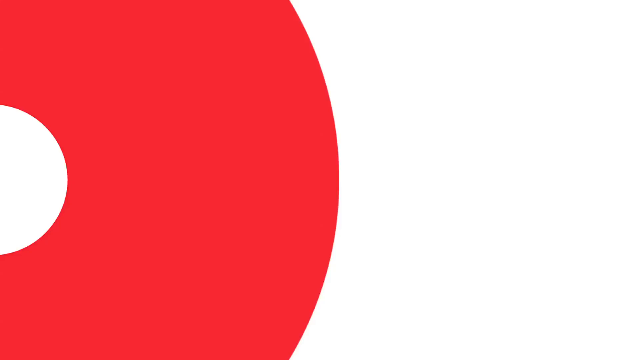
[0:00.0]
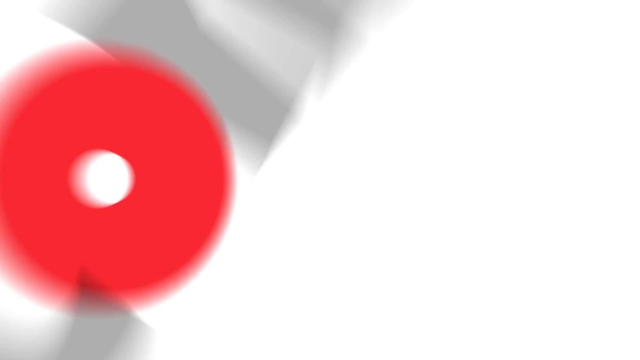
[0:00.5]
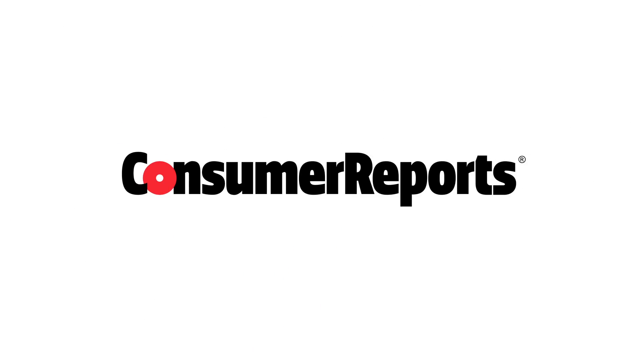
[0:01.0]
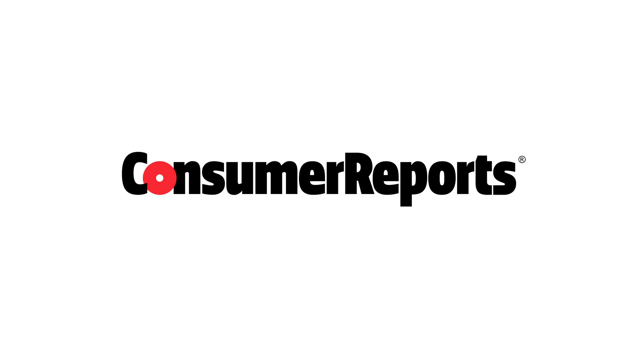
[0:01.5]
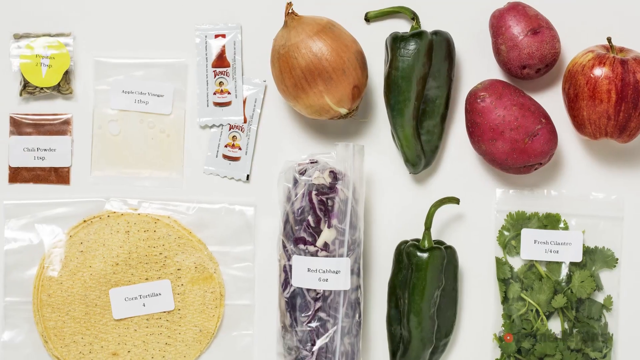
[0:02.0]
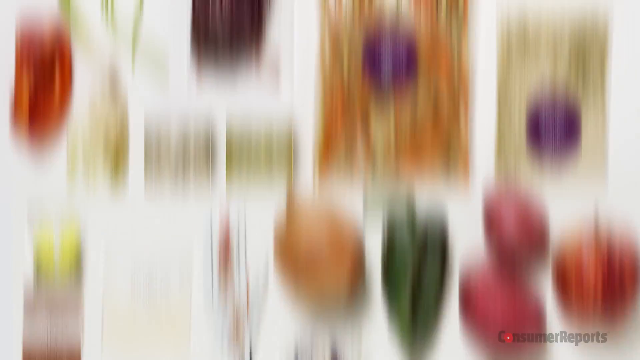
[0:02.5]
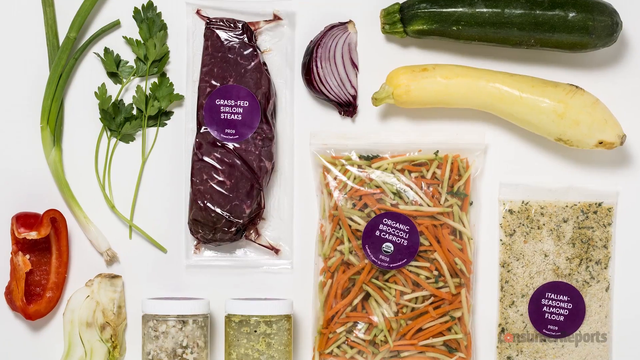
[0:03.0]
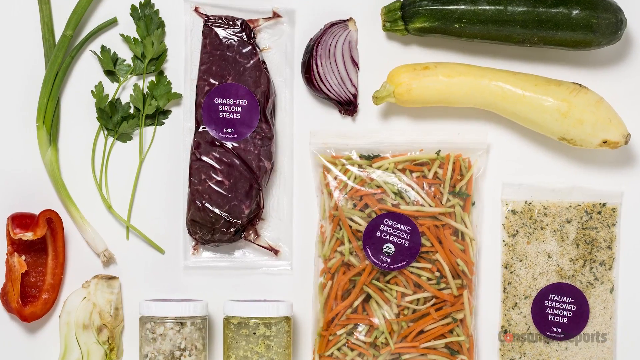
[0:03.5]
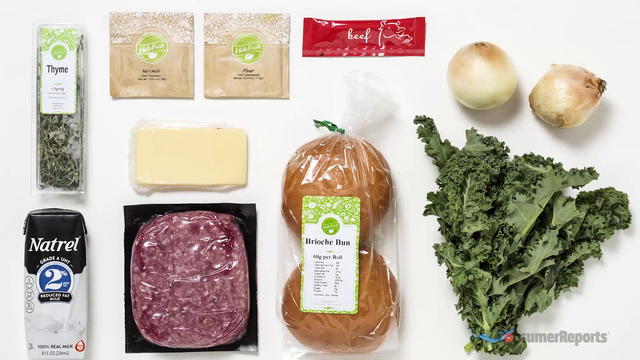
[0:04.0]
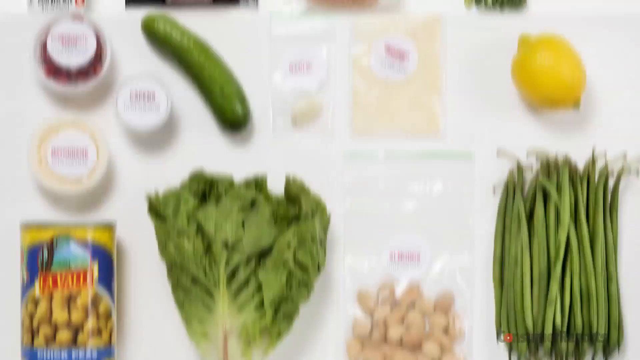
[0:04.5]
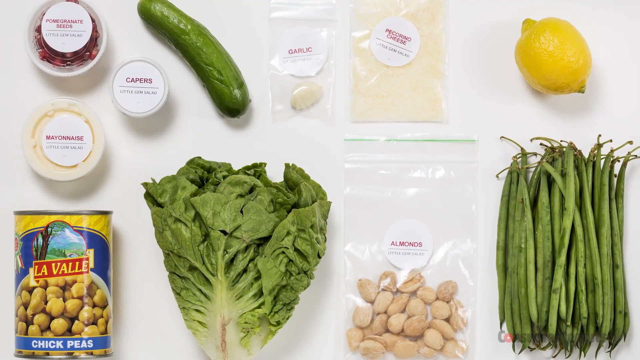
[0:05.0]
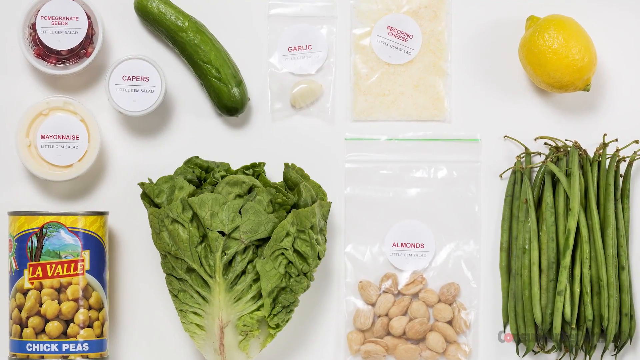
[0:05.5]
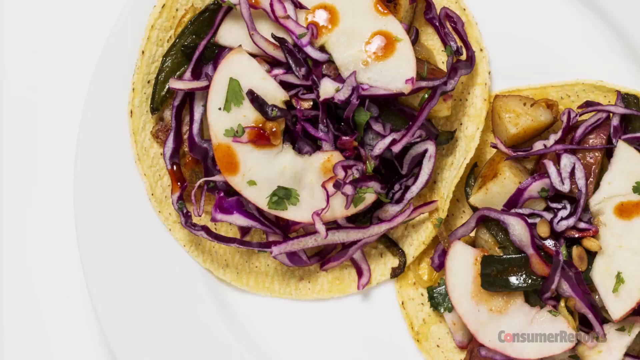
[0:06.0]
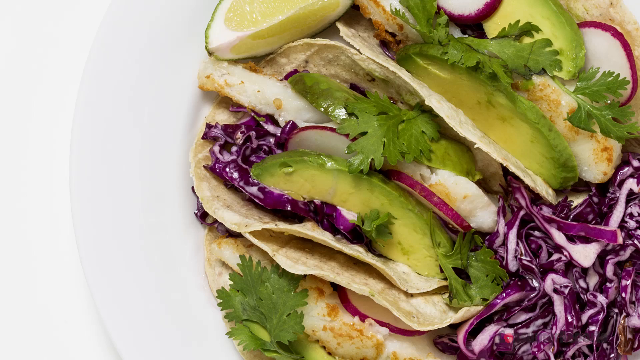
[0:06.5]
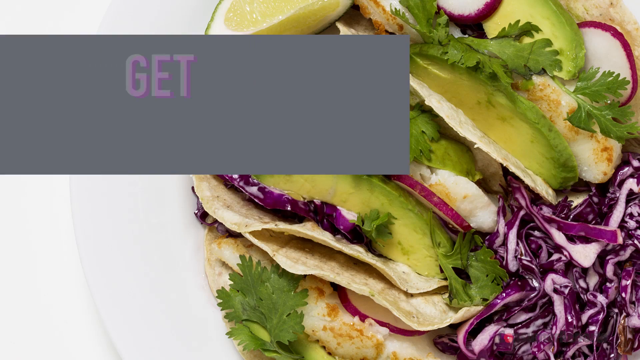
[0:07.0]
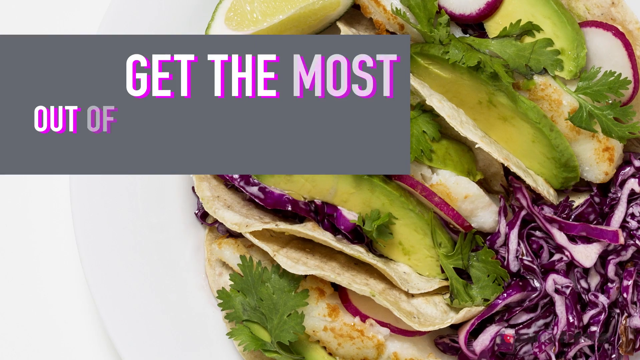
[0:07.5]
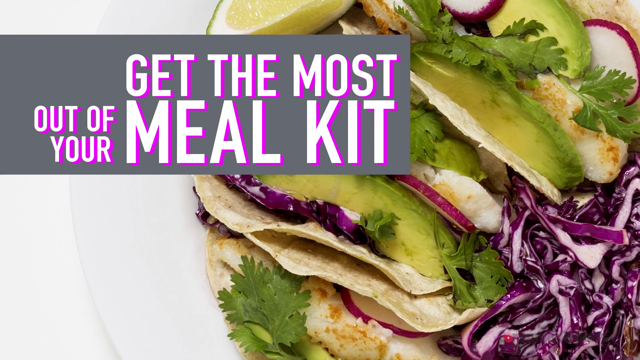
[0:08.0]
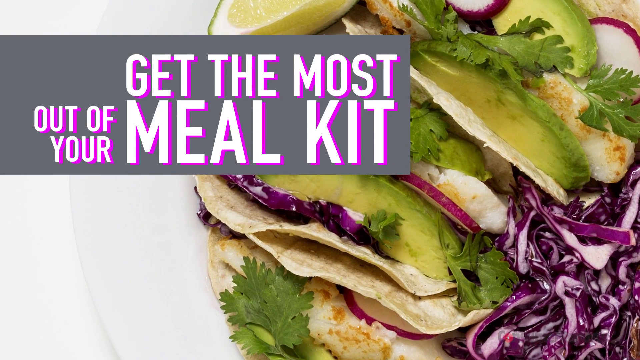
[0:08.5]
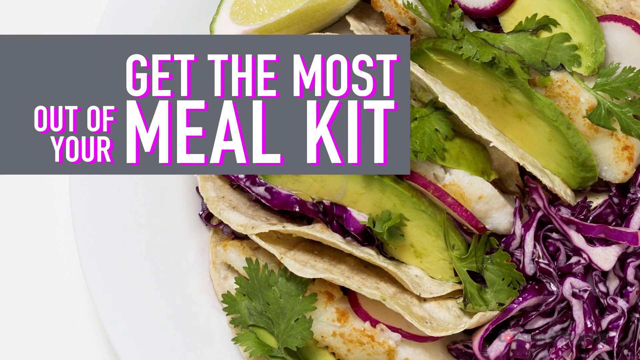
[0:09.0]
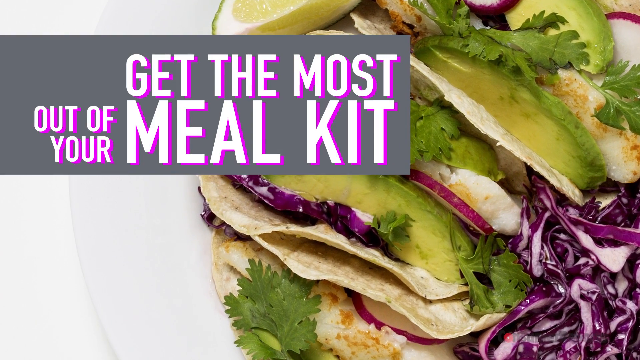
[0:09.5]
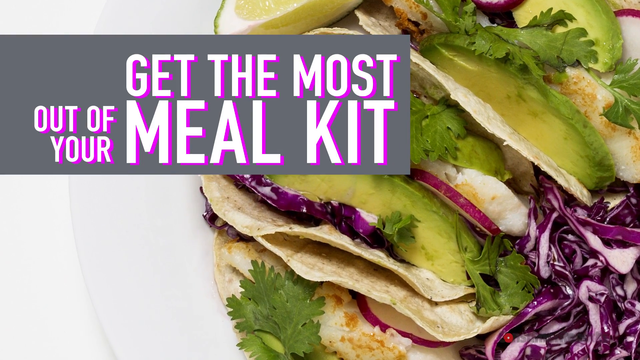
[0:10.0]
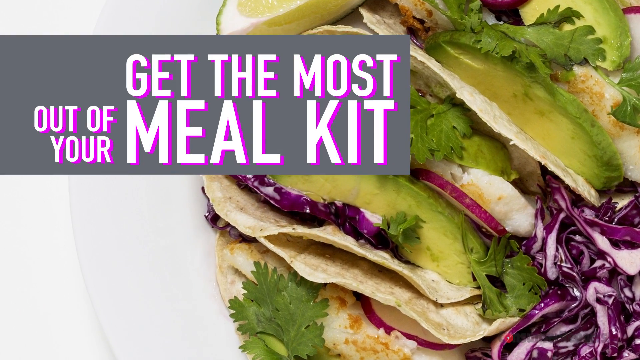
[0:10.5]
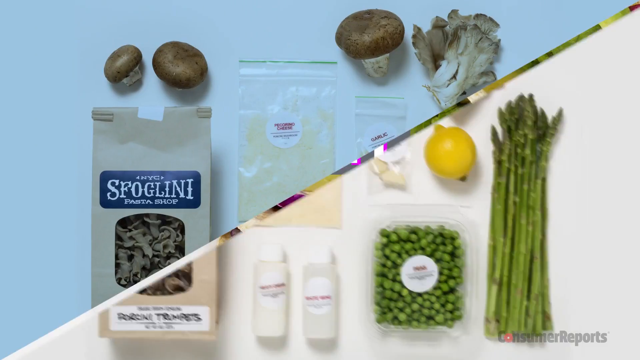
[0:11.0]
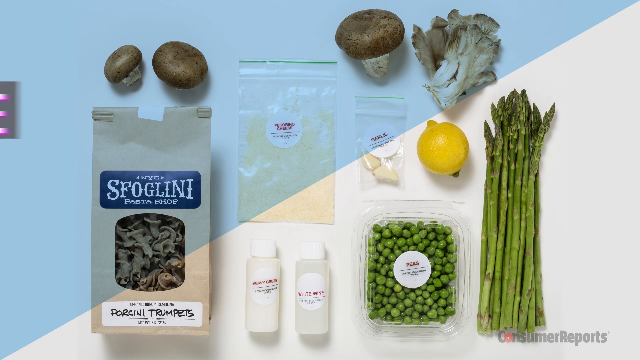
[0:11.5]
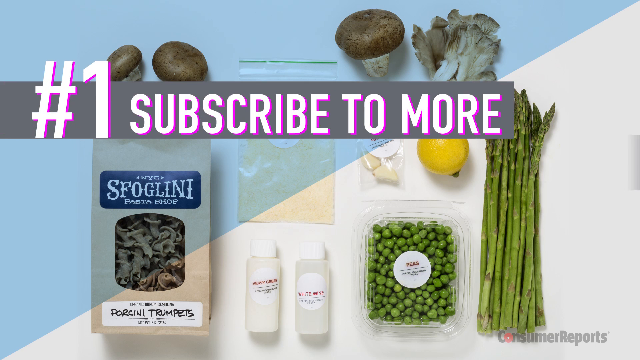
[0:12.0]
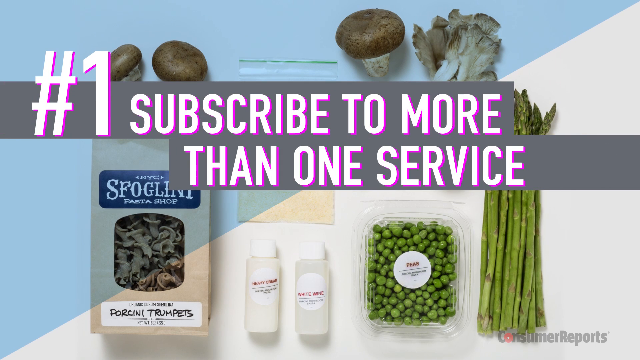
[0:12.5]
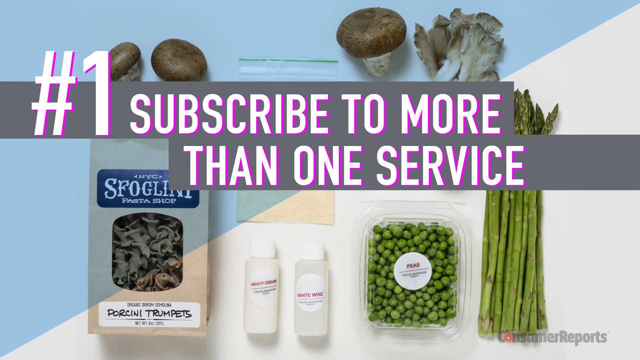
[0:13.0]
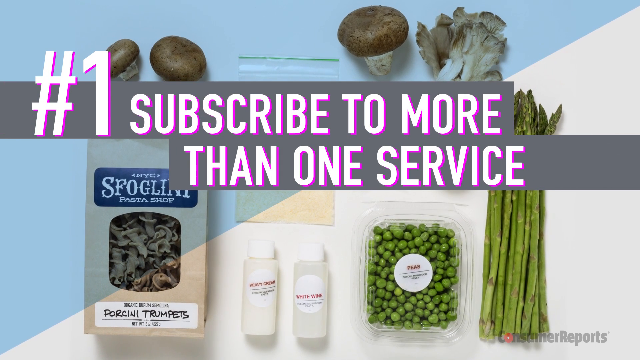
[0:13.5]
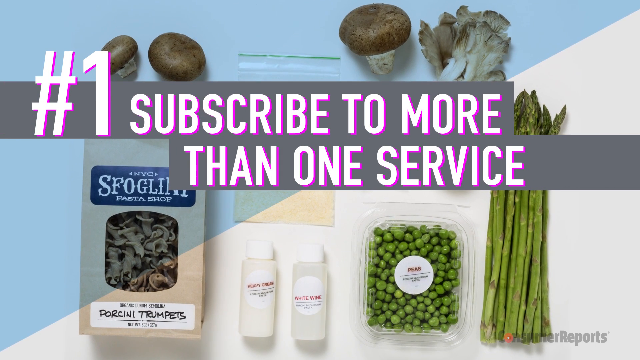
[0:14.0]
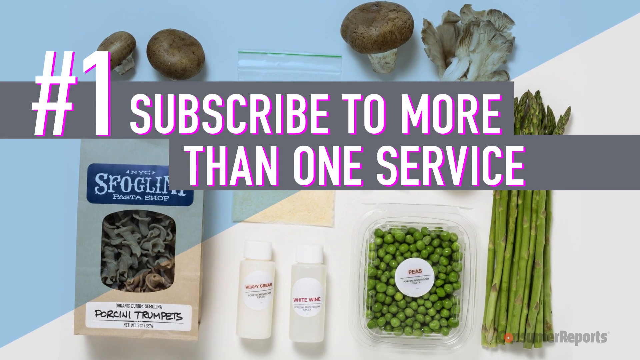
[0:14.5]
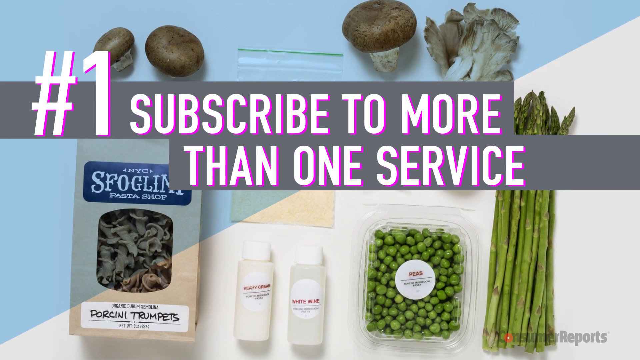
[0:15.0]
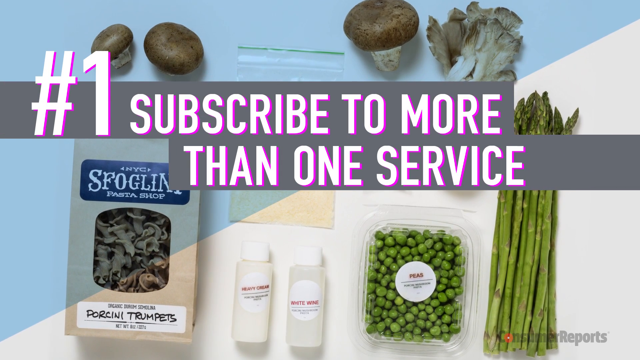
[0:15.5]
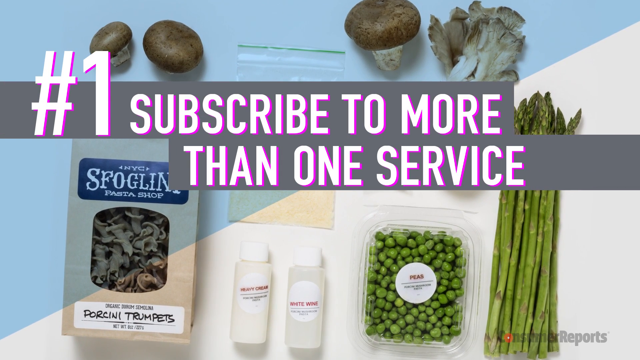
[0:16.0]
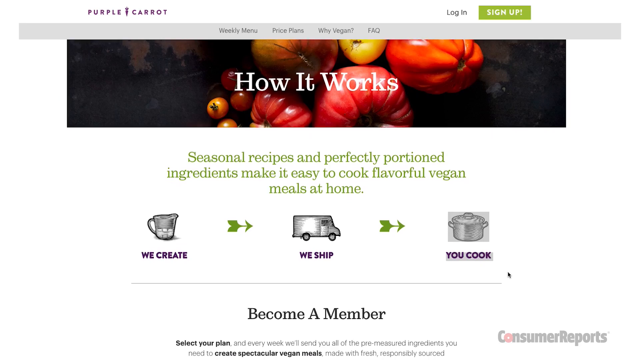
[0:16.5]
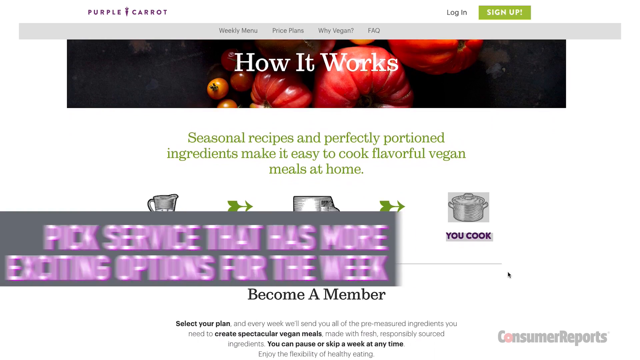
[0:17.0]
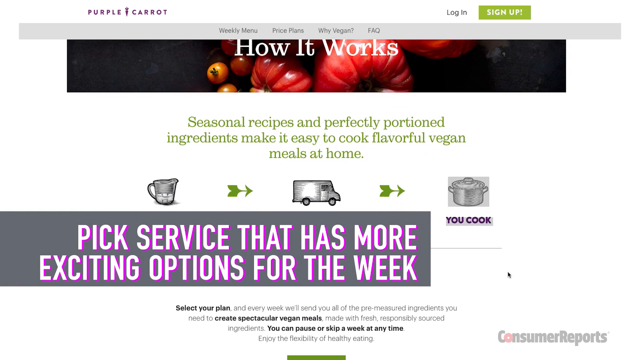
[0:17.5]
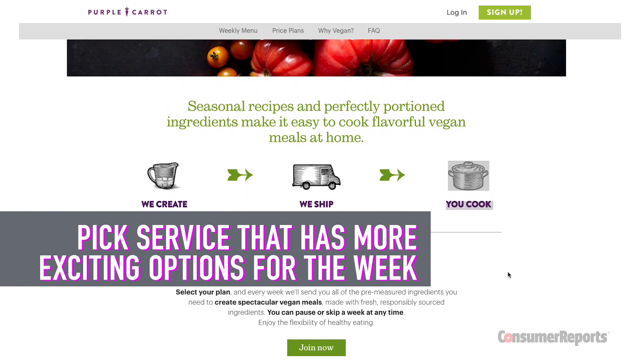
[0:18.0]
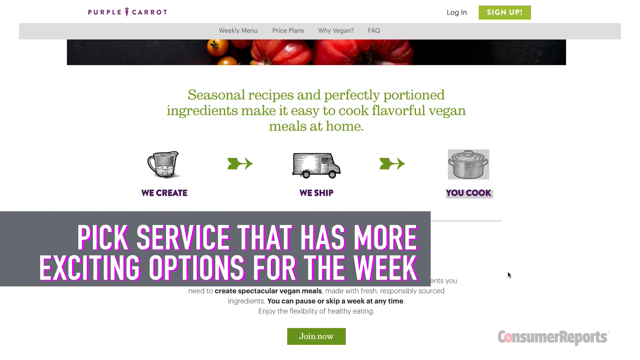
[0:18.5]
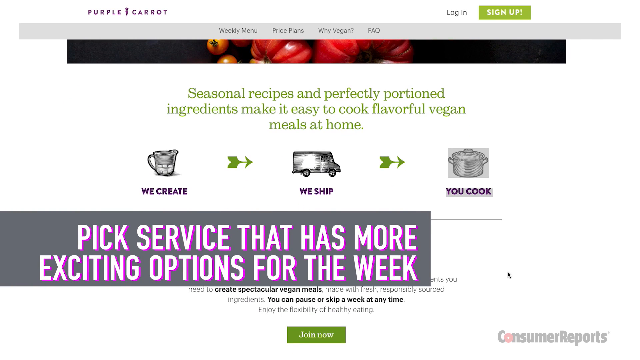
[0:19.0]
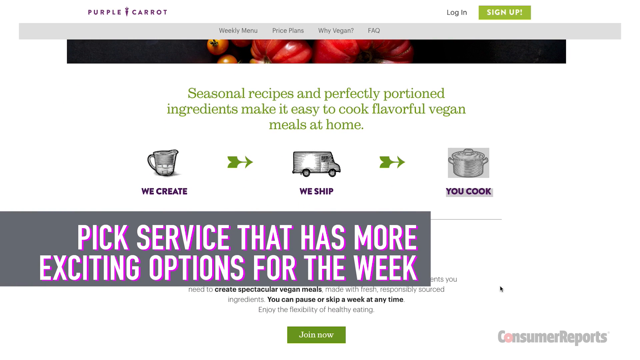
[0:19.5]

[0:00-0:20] The video opens on a white background with large black letters reading "Consumer Reports"; the O in Consumer Reports is red. Next come different types of fruit and vegetables, along with condiments and packaged goods: lettuce, onions, cucumbers, lemons, ketchup packets, red potatoes, apples and hot peppers. Prepared meals made from these items follow.